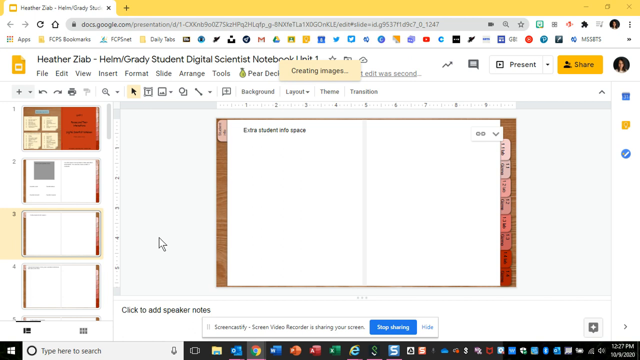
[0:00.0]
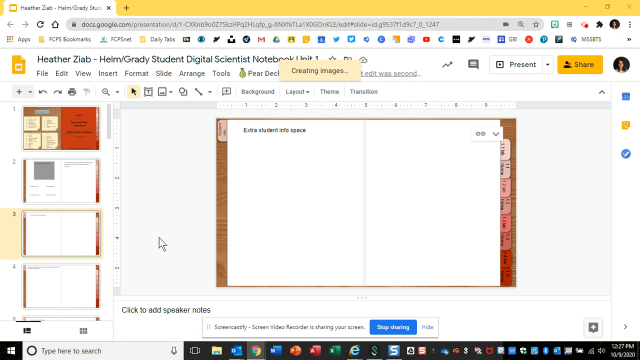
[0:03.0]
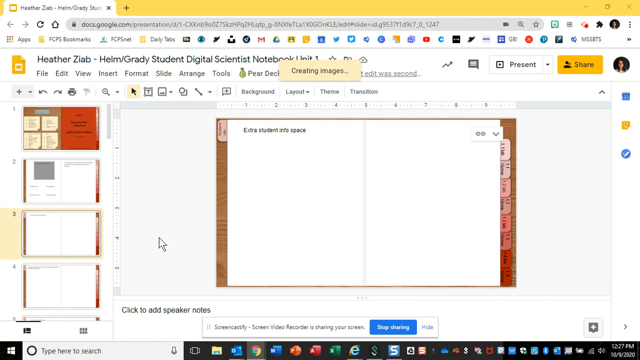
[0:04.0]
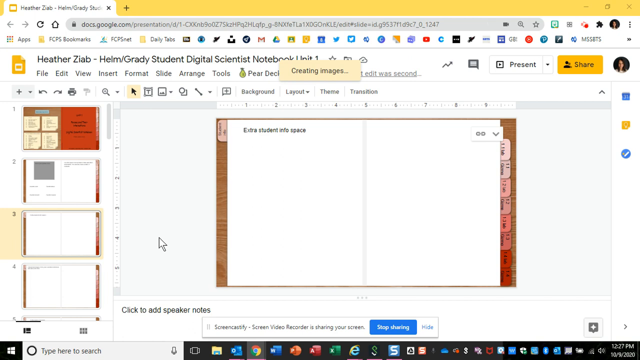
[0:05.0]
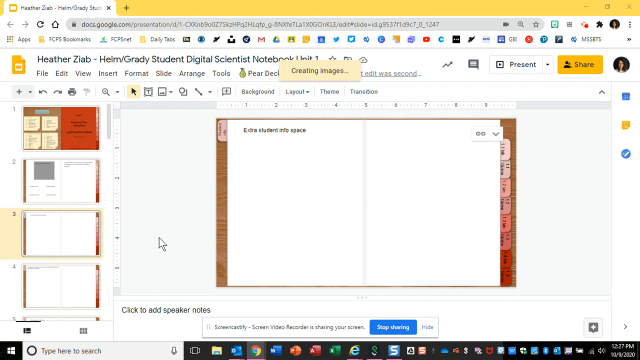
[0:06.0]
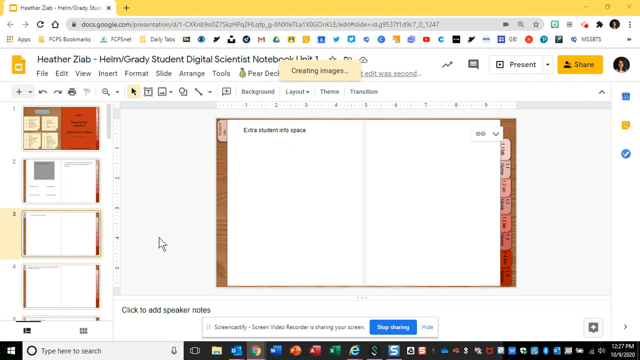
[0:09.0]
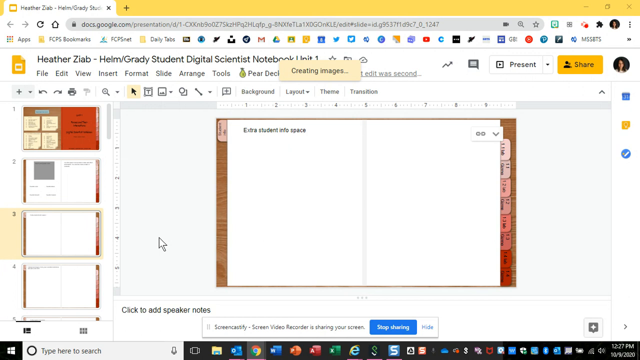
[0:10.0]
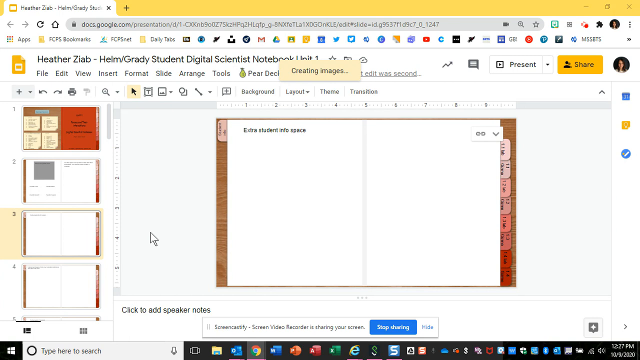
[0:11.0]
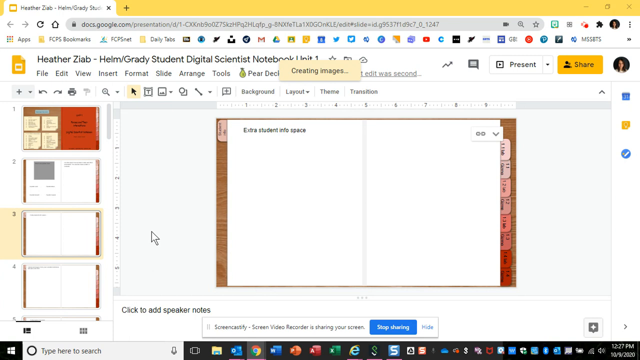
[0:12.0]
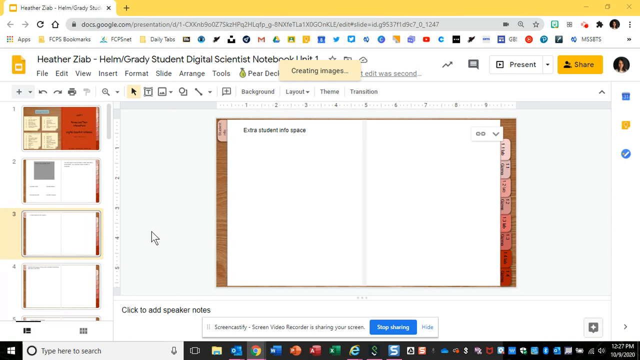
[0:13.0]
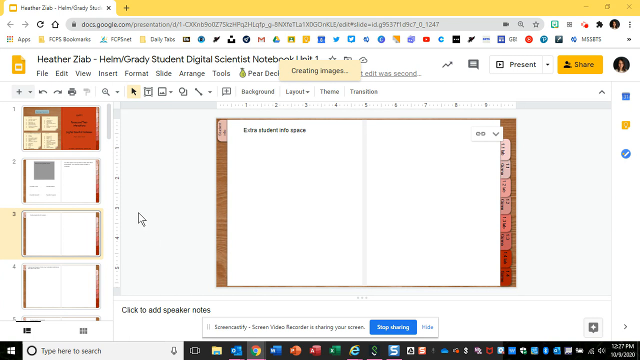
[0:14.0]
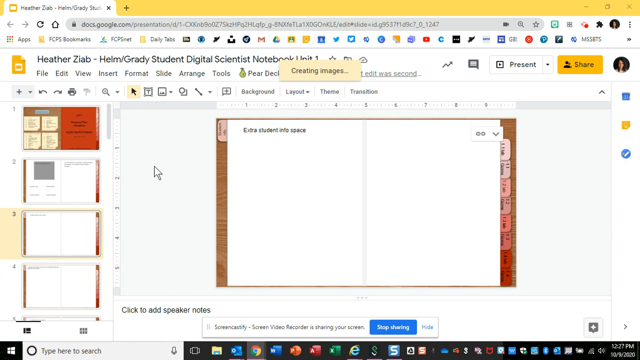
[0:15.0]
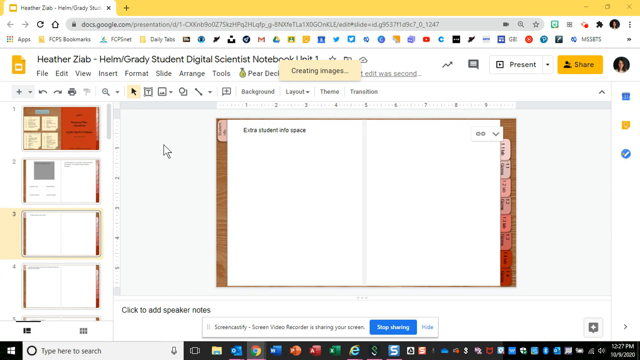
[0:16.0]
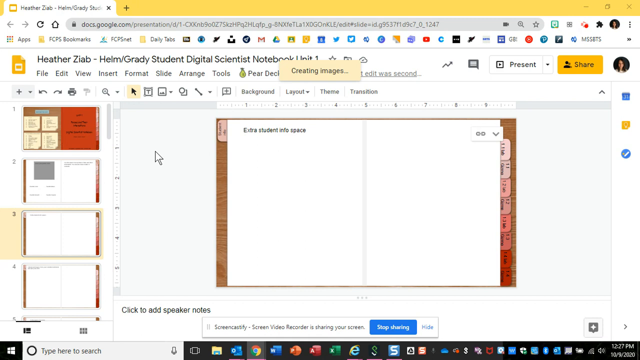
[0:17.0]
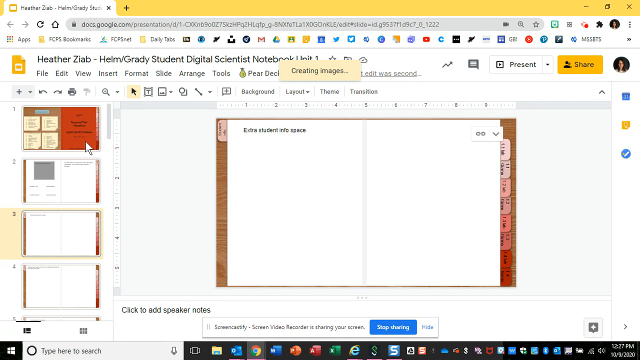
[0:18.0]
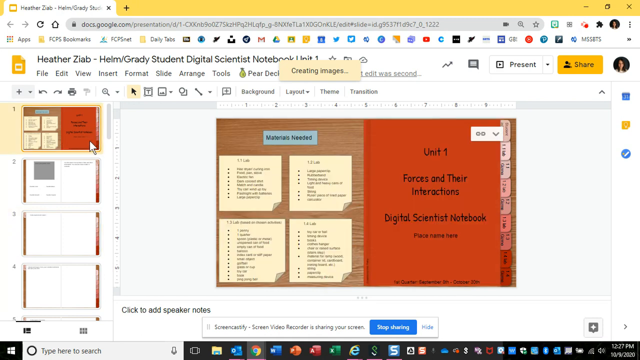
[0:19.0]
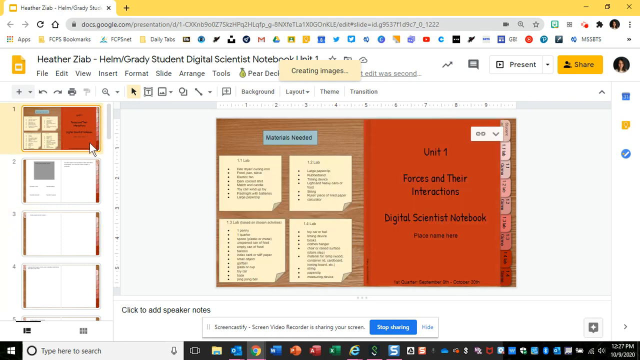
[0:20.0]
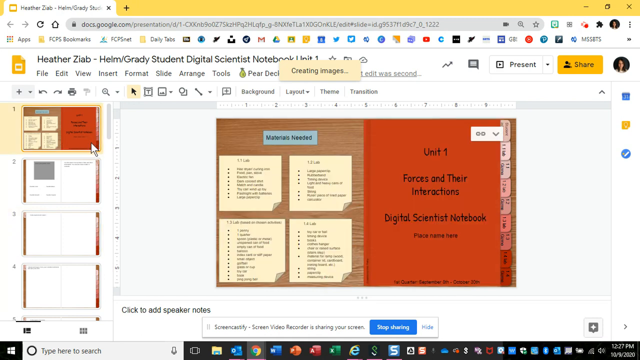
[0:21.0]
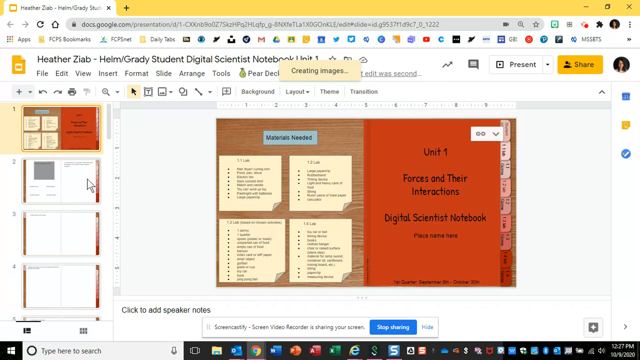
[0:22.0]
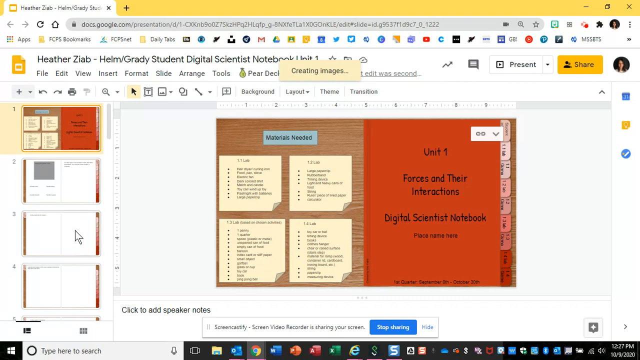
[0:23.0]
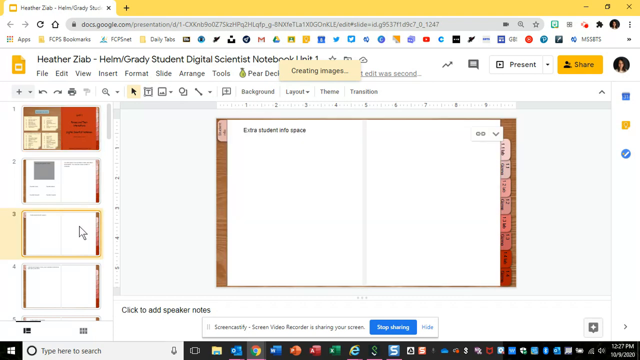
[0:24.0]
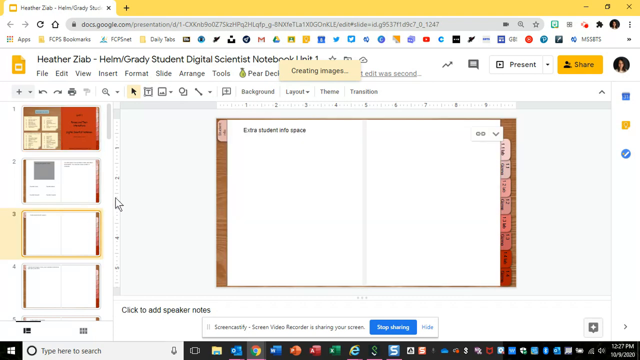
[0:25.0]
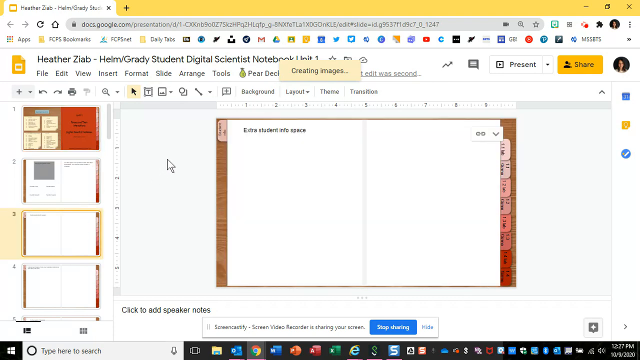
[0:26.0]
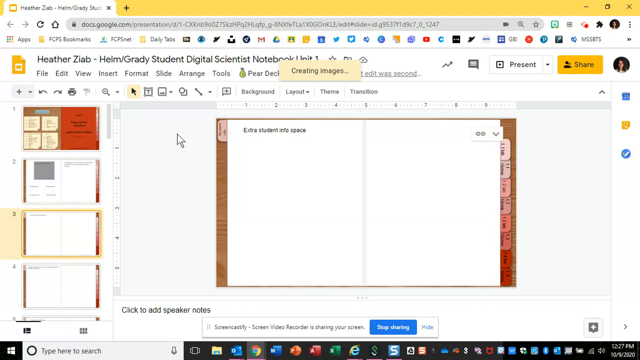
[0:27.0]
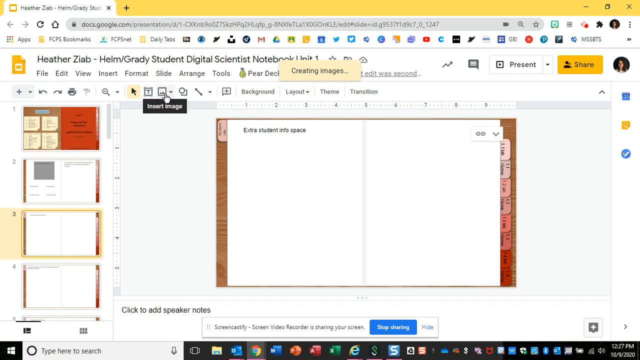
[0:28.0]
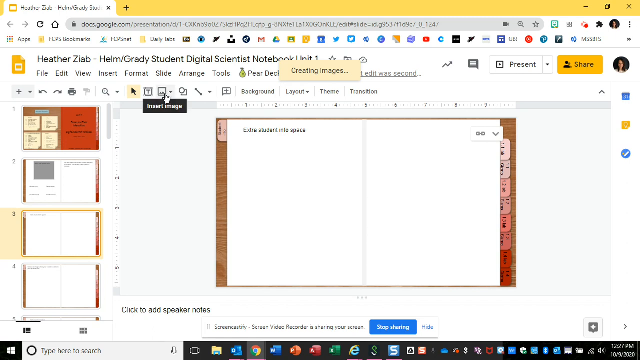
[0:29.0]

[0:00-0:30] This is a Google Docs tutorial titled "Heather Zia Helm / Grady student digital scientist notebook." The interface has two panels: a scrolling column of pages on the left and a main frame on the right where the work is done. The document looks like a notebook with tabs of different colors on the side. The first page of the digital notebook says "extra student info space." The user clicks the first option in the left column, an editable prototype, and it appears in the main frame. It has two pages: on the left are four small sheets of paper, and on the right the text includes "unit one forces" and "digital scientist notebook." This page has tabs on the side. Next, the user clicks the third option, which shows the inside of the notebook, and then clicks Insert Image on the menu ribbon.